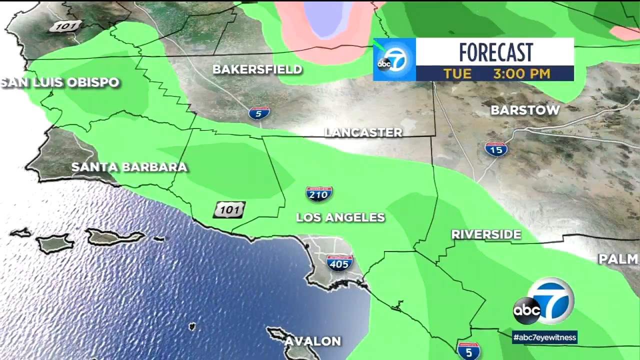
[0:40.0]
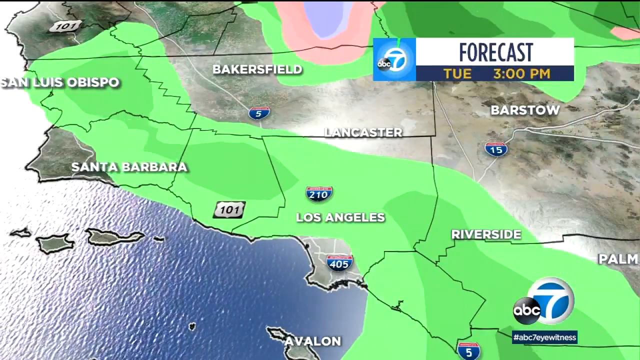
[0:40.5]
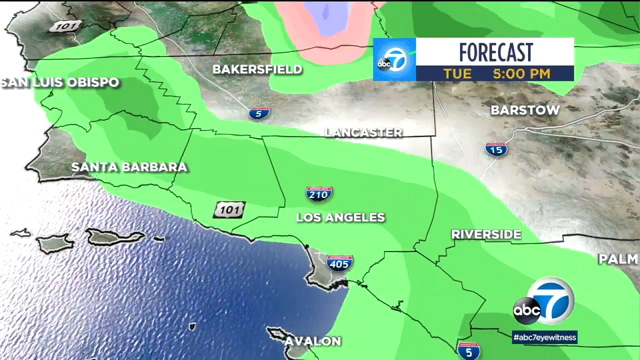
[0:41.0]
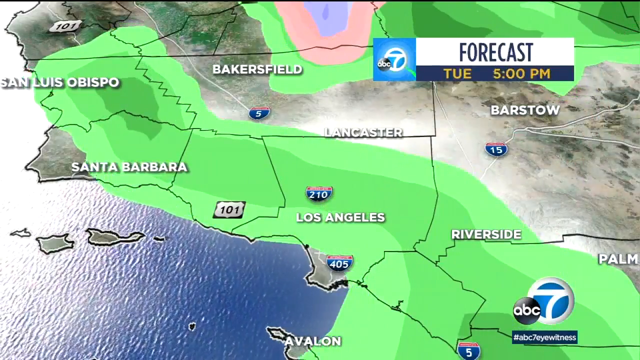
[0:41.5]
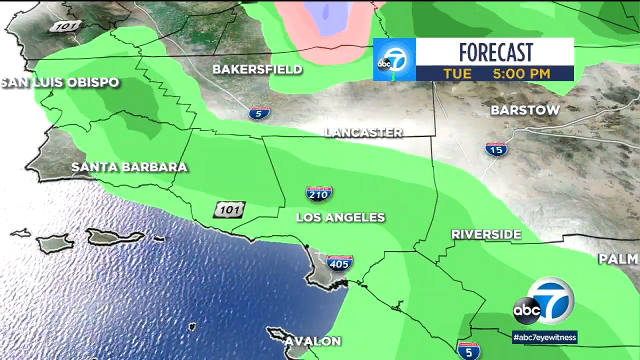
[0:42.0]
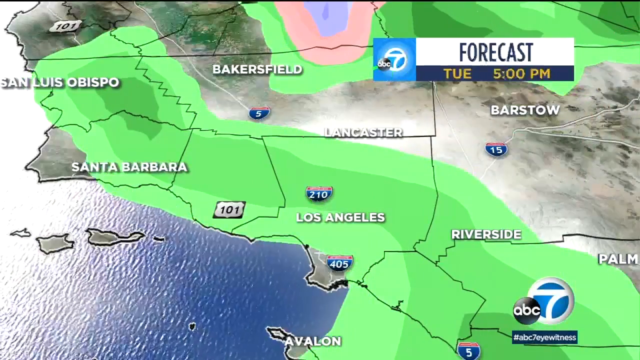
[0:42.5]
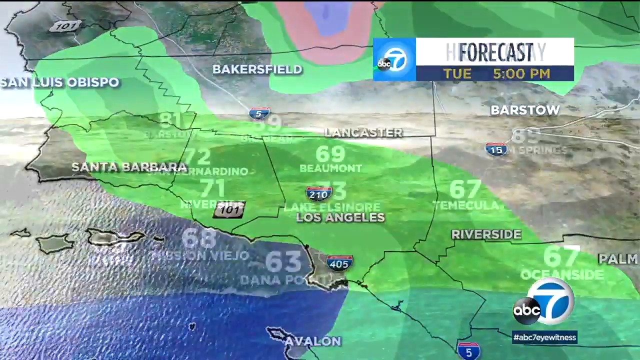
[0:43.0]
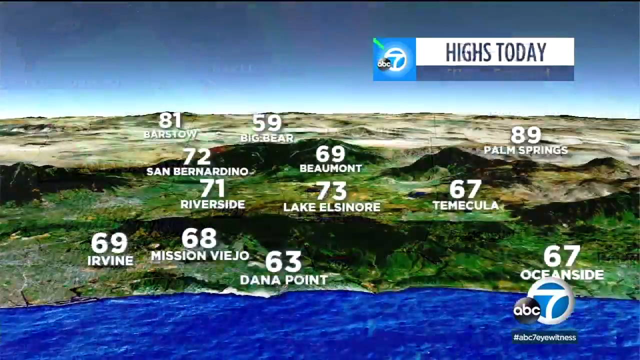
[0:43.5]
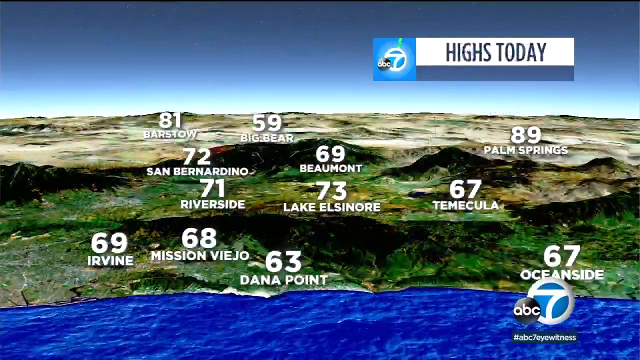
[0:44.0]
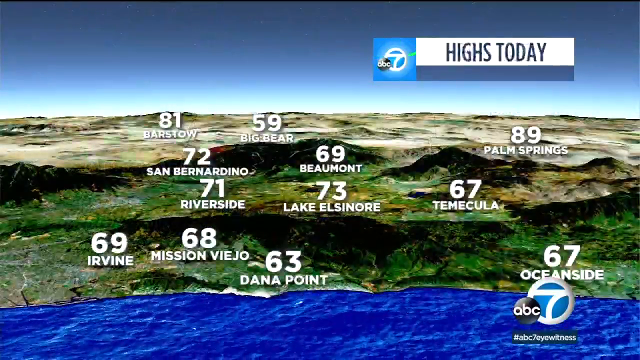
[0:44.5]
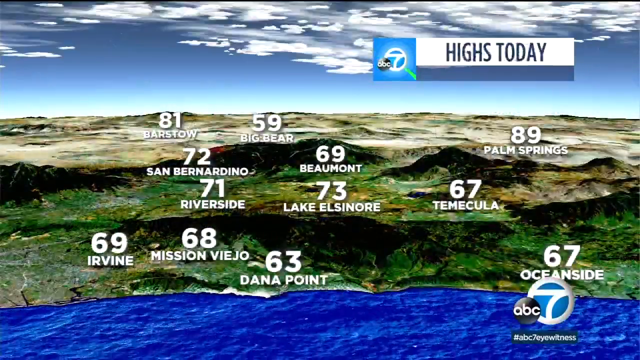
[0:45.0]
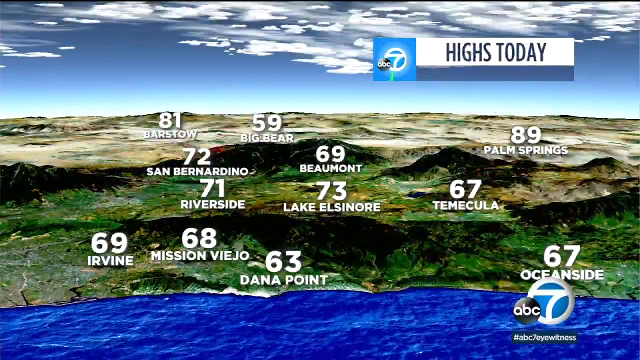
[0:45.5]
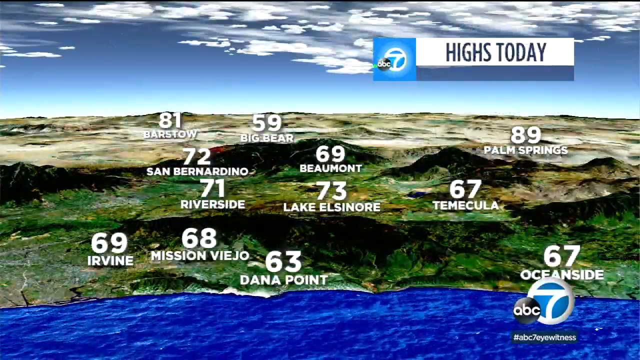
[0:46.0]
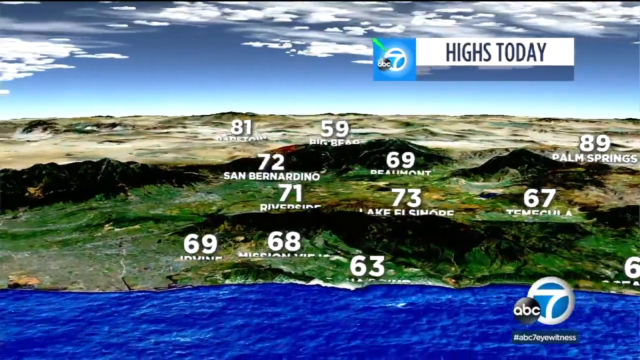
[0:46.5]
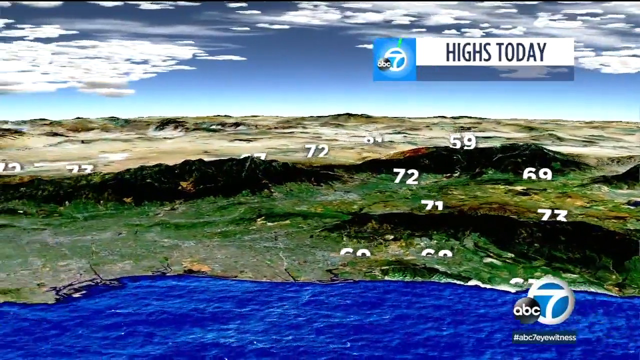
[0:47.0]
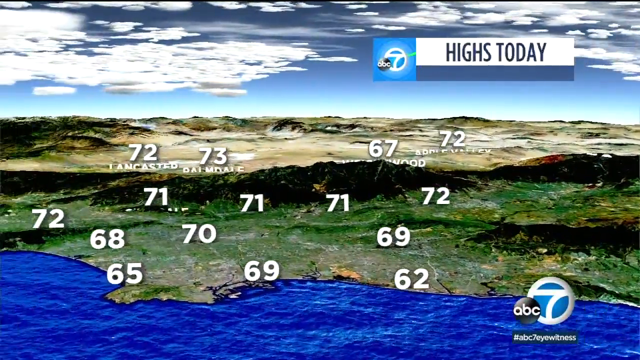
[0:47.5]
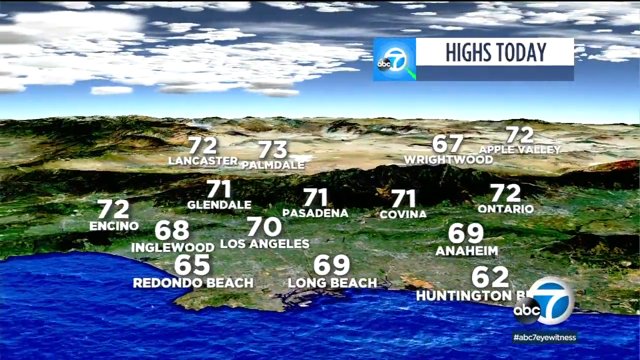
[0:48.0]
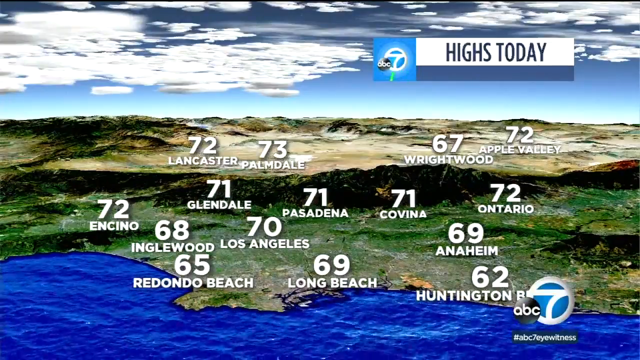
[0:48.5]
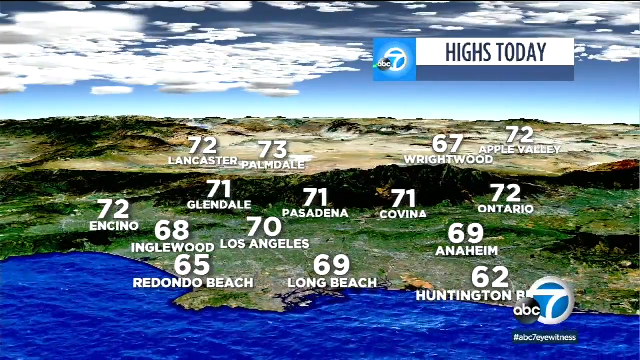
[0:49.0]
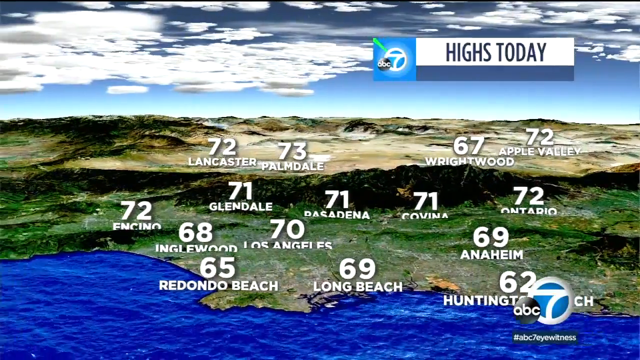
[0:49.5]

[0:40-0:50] A forecast map shows Bakersfield, San Luis Obispo, Santa Barbara, Los Angeles, Riverside and Barstow, starting at Tuesday 5 p.m. Cities appear with numbers: Big Bear 59, Beaumont 69, Palm Springs 89, Temecula 67, Oceanside 67, Turner Point 63, Mission Virgil 68, Avon 69, San Bernardino 72, Riverside 71 and Barstow 81. Highs for today follow: Lancaster 72, Palmdale 73, Wrightwood 67, Apple Valley 72, Encino 72, Glendale 71, Pasadena 71, Covina 71, Ontario 72, Long Beach 69, Redondo Beach 65, Inglewood 68, Los Angeles 70 and Huntington Beach 62. The view moves slowly toward Lancaster and Palmdale, with the city names and numbers written on what looks like a mountain.